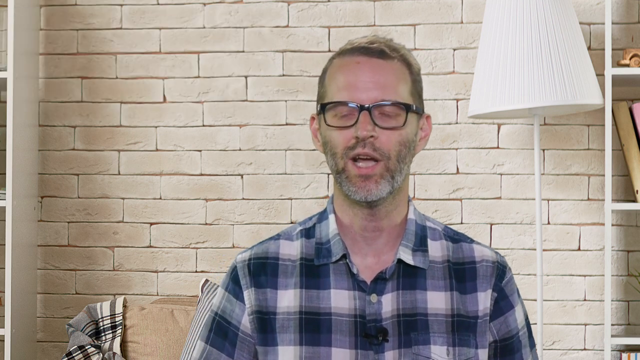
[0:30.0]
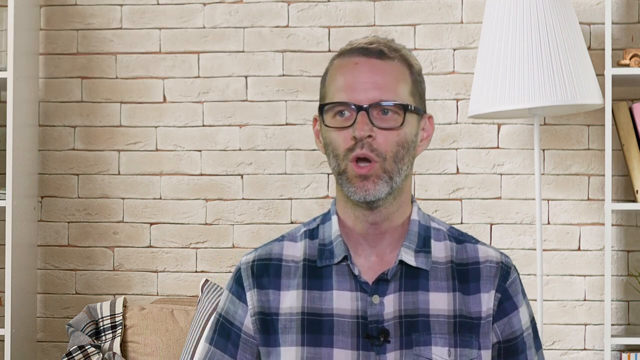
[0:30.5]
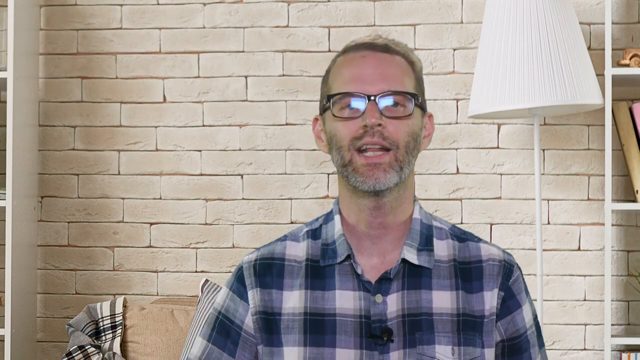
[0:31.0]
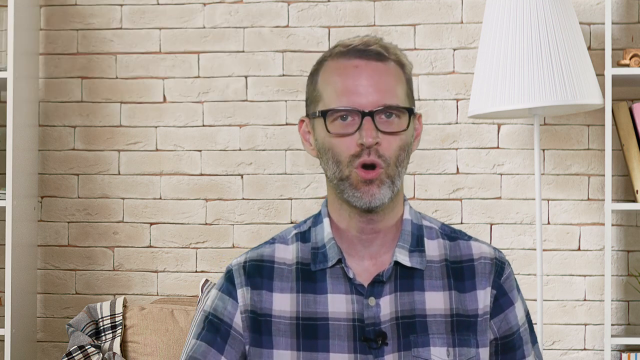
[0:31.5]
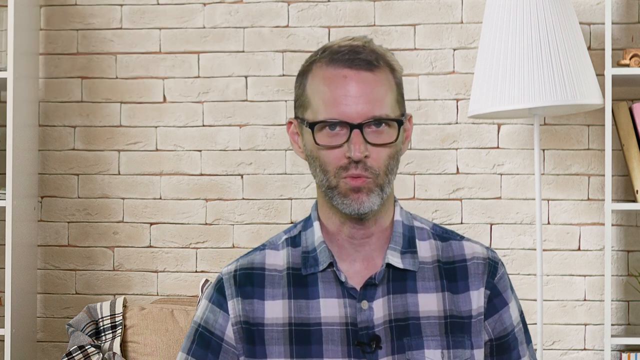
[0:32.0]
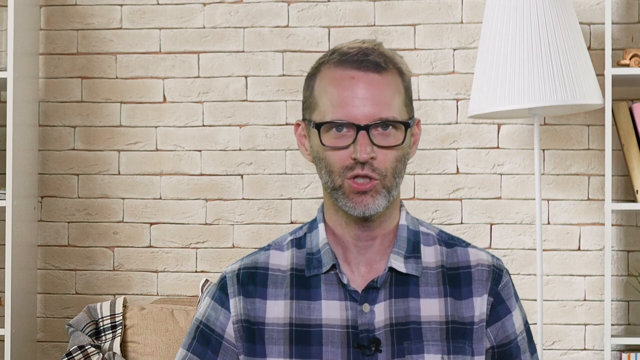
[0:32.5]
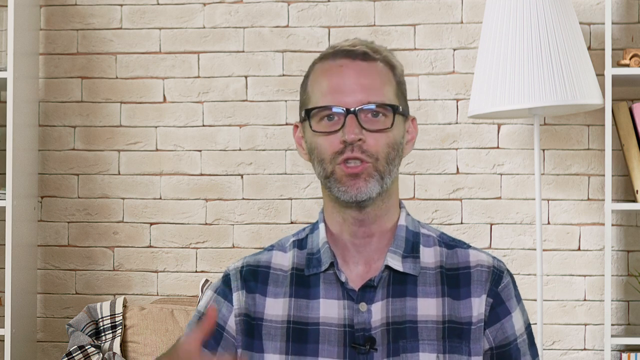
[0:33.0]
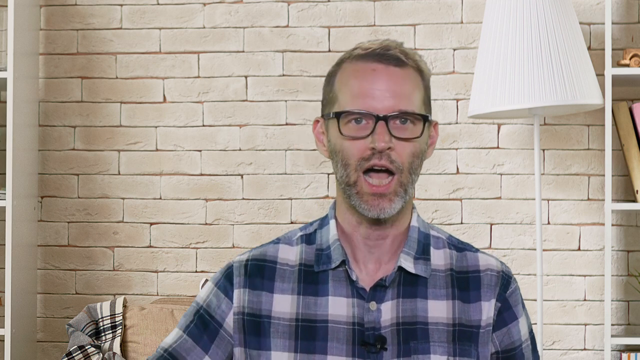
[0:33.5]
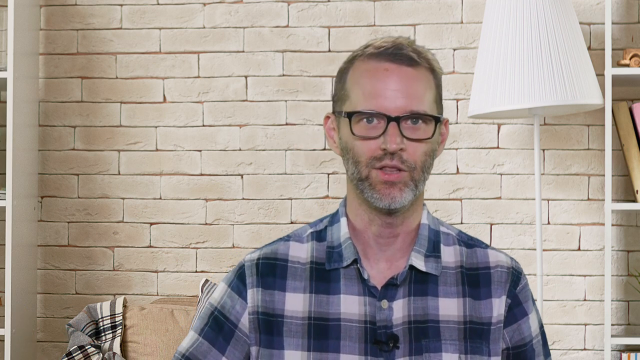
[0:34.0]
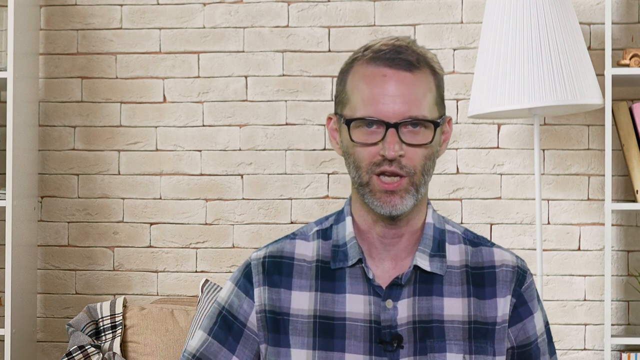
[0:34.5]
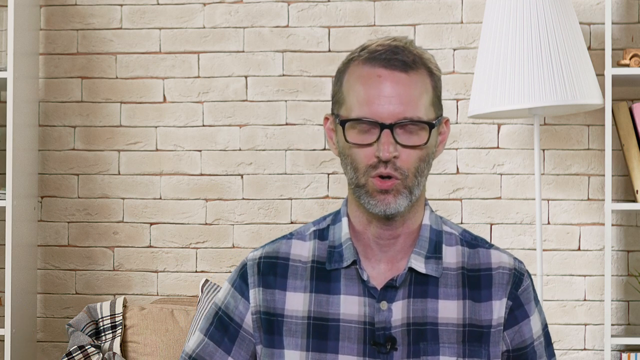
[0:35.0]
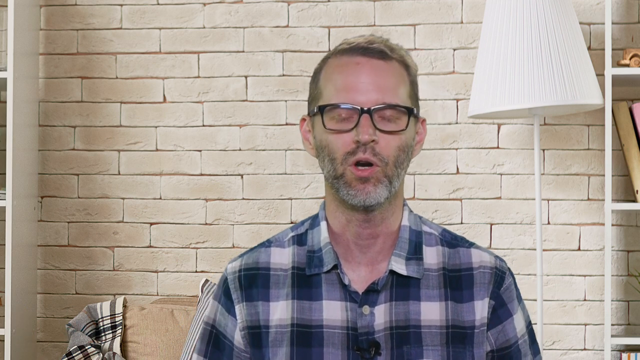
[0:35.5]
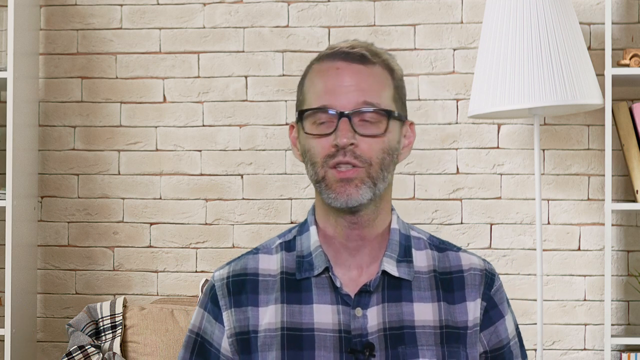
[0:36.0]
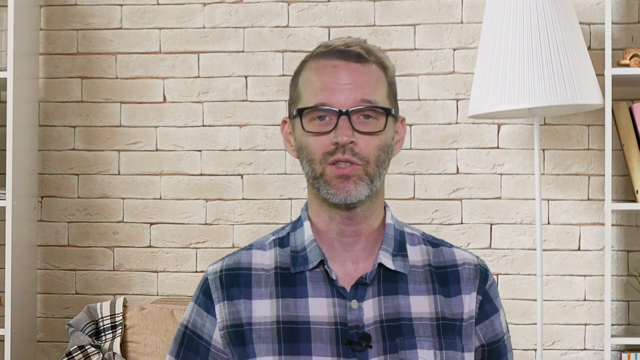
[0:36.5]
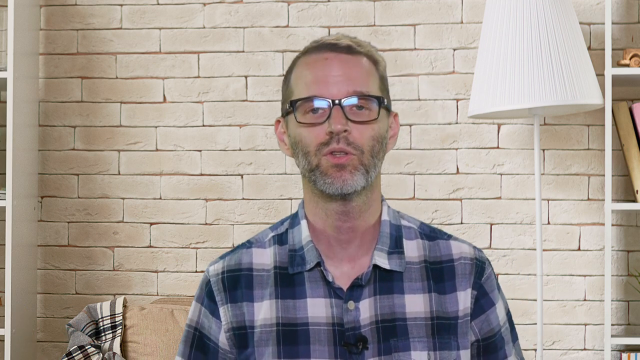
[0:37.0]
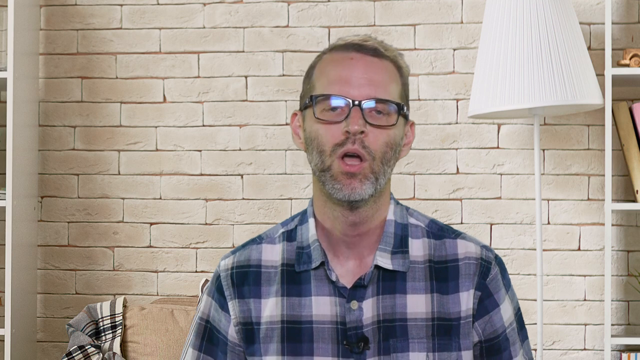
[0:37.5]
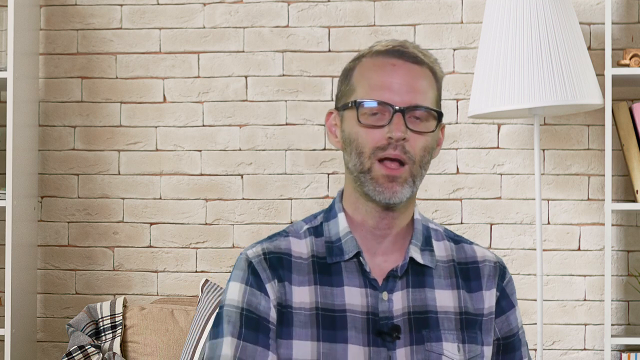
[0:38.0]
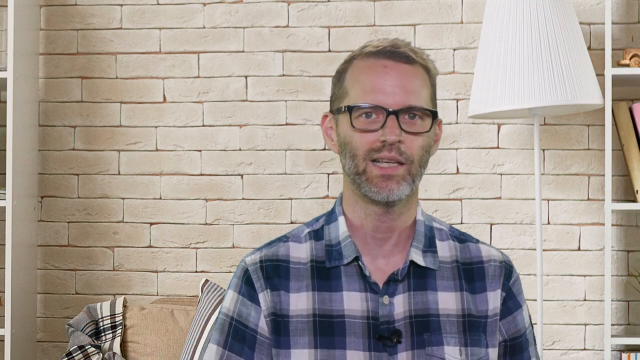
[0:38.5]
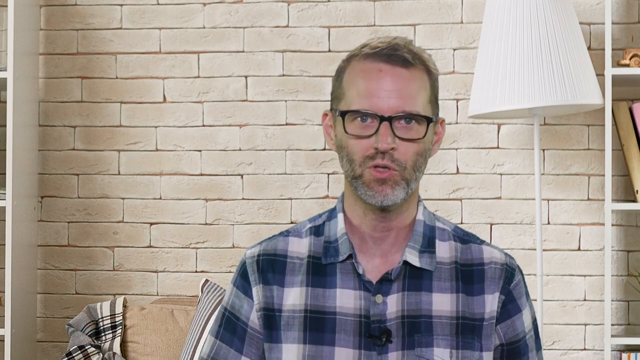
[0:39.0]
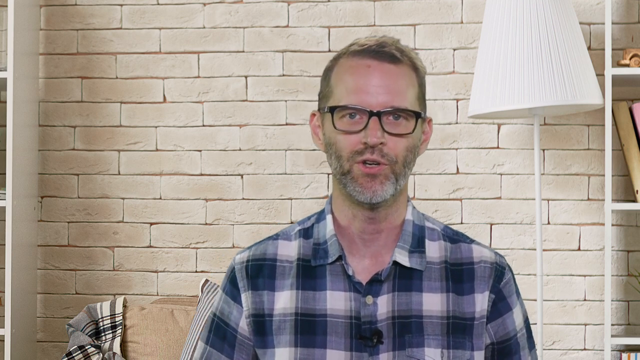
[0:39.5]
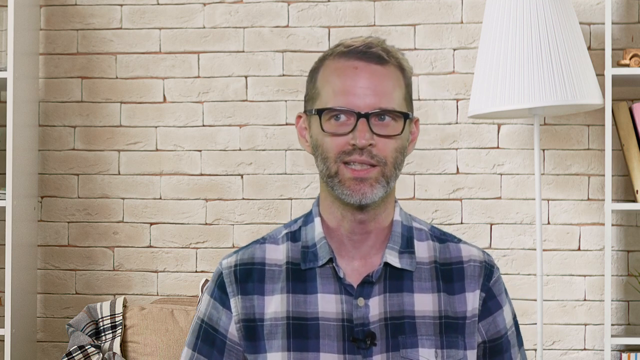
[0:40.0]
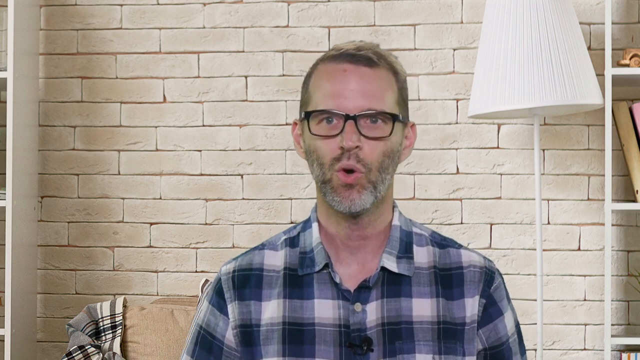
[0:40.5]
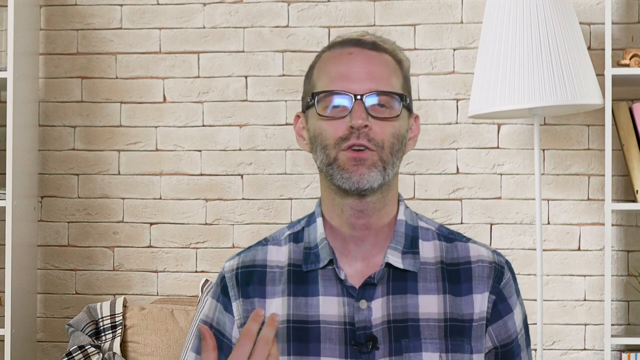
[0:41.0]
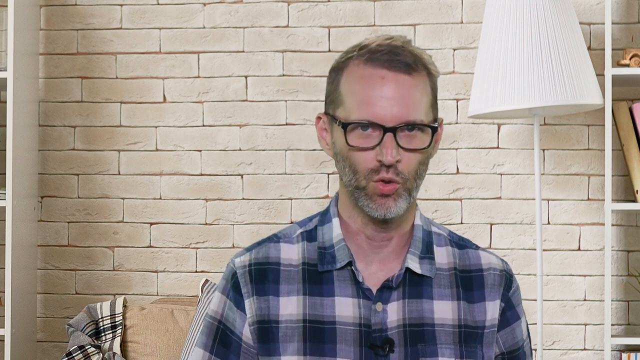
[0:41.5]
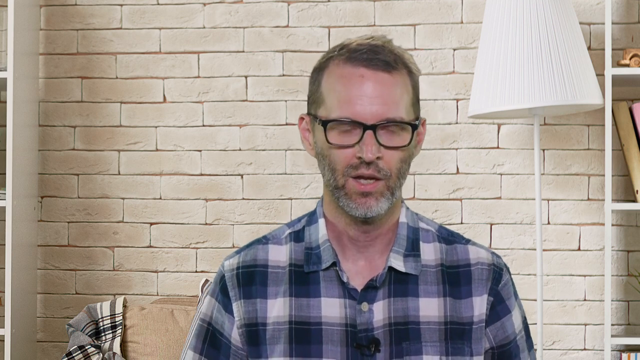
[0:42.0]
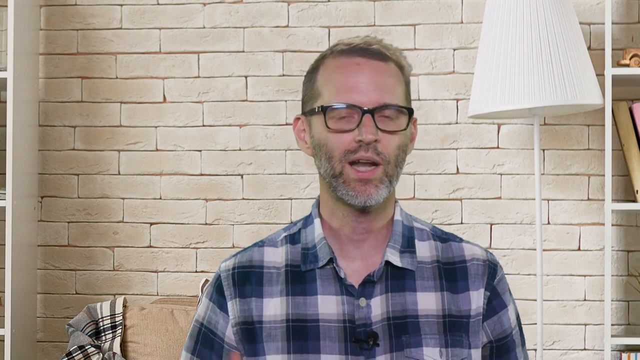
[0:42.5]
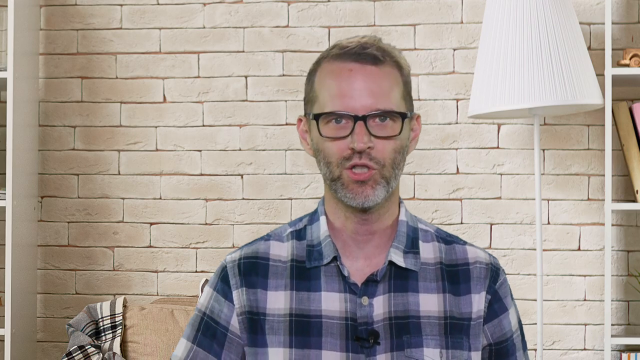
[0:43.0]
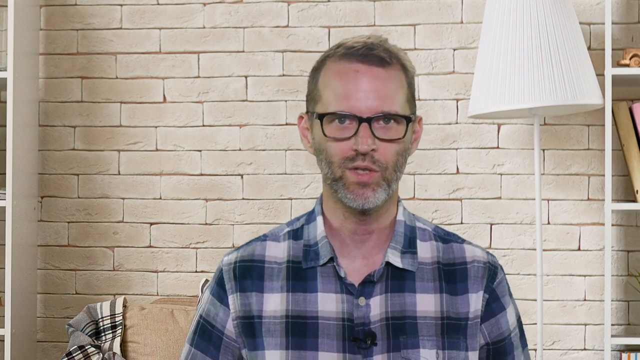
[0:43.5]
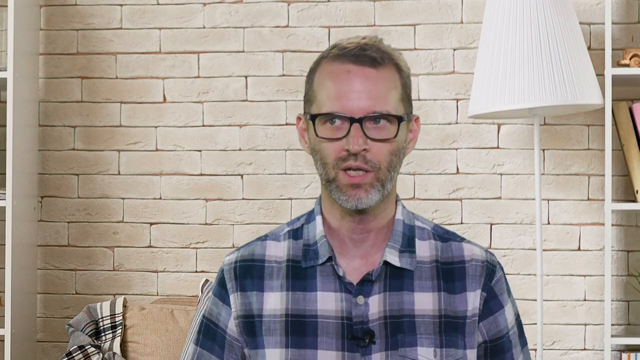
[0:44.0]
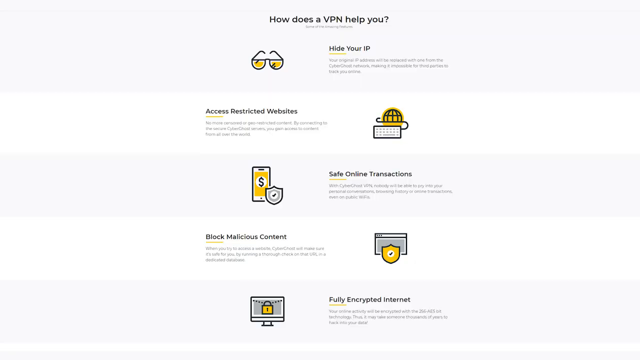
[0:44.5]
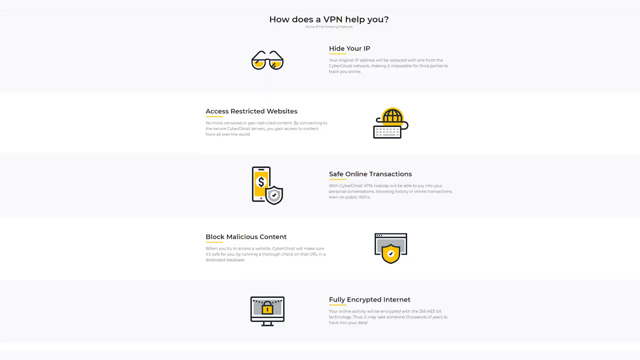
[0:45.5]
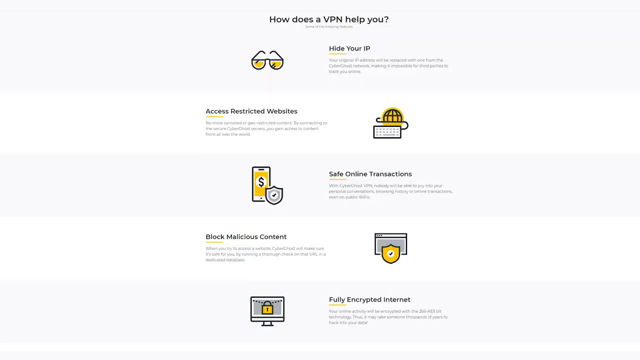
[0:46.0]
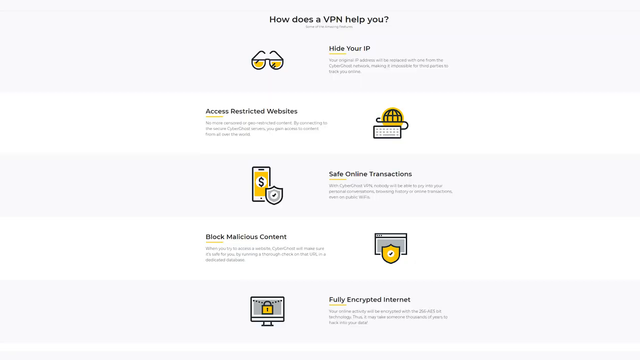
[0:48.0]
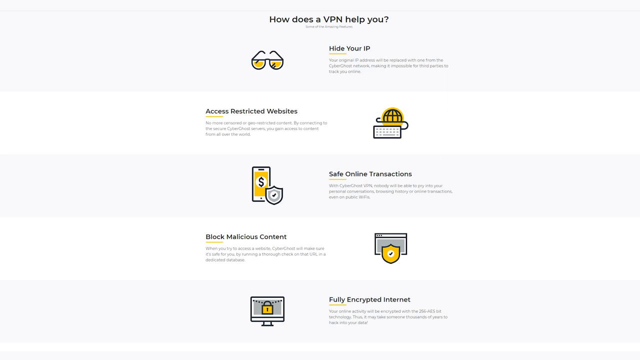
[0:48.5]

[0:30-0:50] The man speaks to the camera and looks slightly away toward the left of the screen, then comes back to the camera and makes a finger-waving motion that looks like circles. He keeps direct eye contact with the camera, waving and kind of emphasizing every word with strong reactions. After he looks slightly away, what looks like a page appears asking how the VPN helps you. It has a kind of white background with text on it and logos with text to the right of them: sunglasses with text to the right reading "Hi, I'm your VPN" and below it "access the crypto website"; a keyboard with a text symbol; a phone; a PayPal online transaction; one for blocked malicious content; and one for fully encrypted internet. The page's main colours look like white, orange and yellow. It then quickly cuts back to the man continuing to speak.